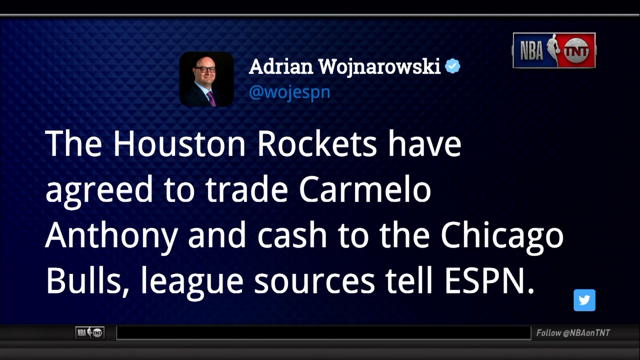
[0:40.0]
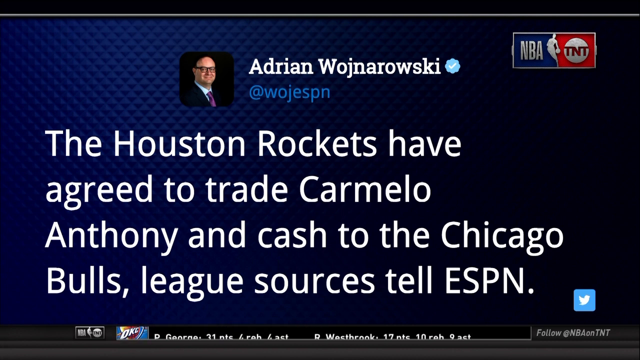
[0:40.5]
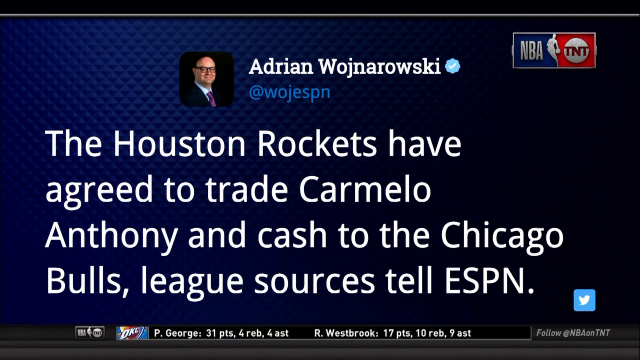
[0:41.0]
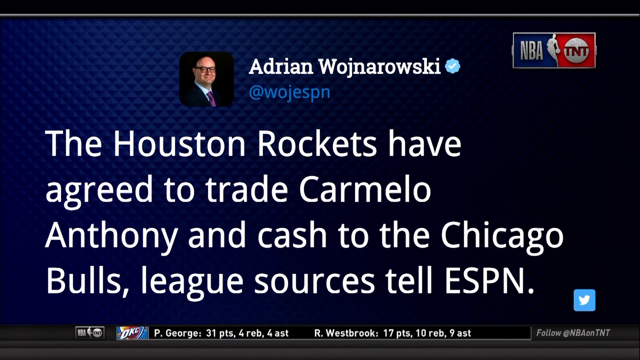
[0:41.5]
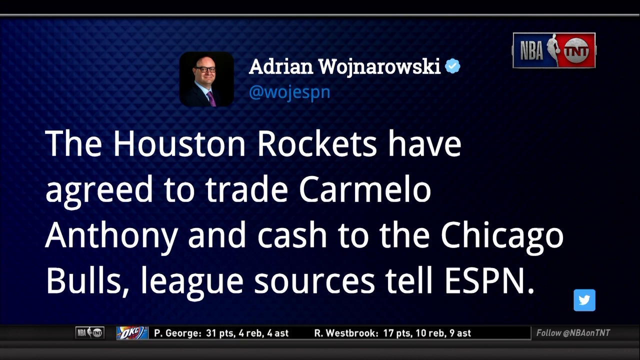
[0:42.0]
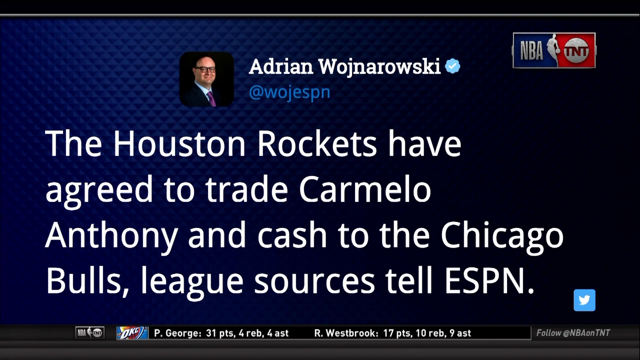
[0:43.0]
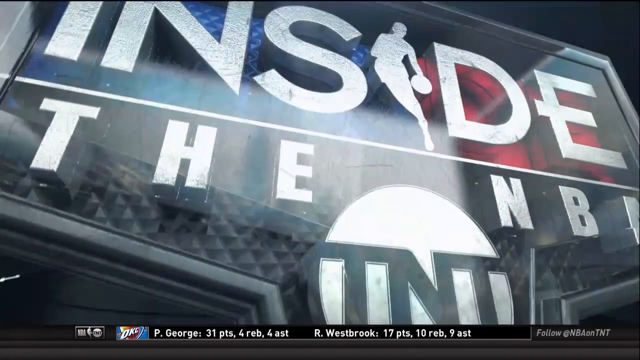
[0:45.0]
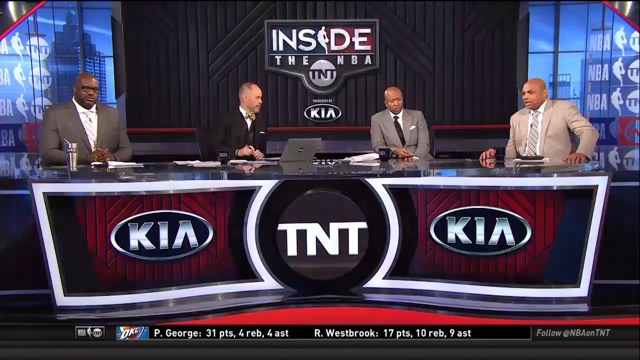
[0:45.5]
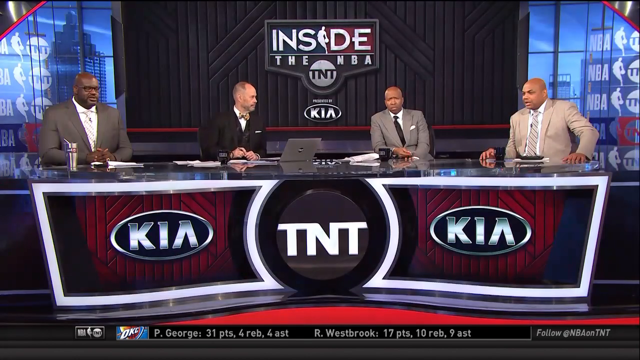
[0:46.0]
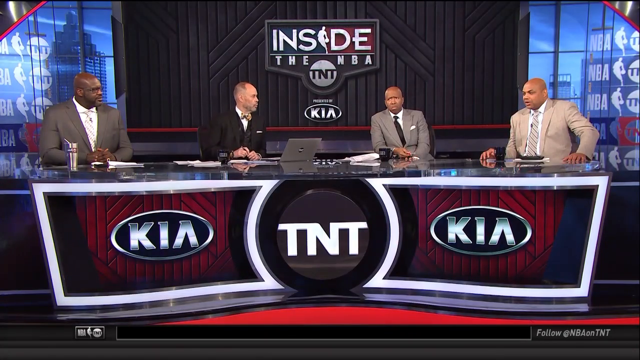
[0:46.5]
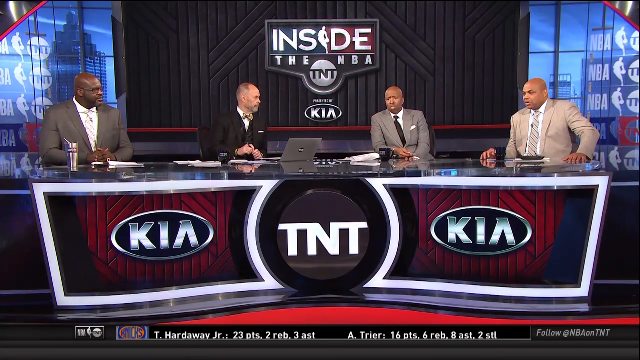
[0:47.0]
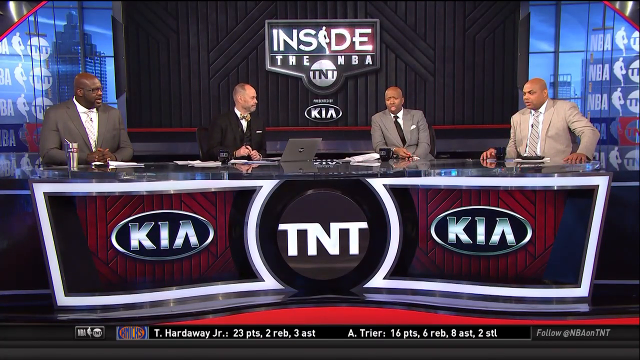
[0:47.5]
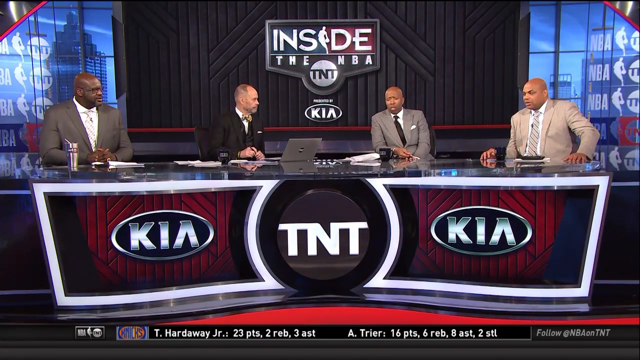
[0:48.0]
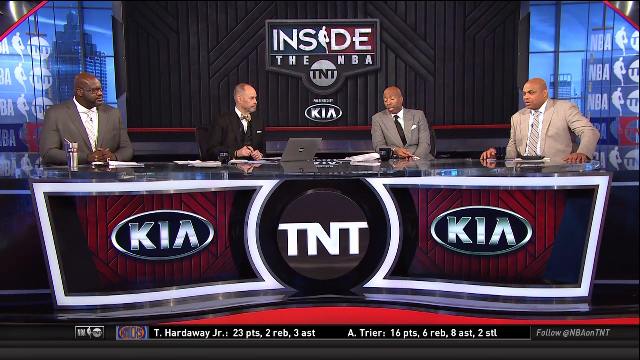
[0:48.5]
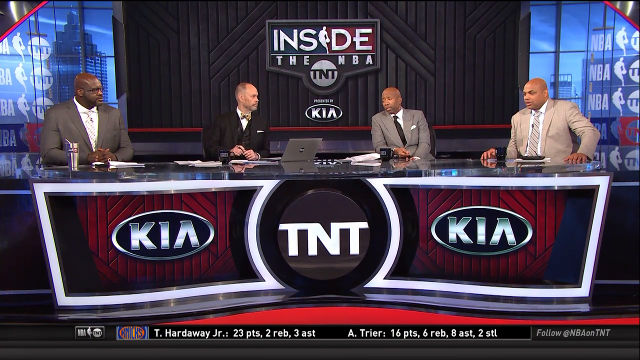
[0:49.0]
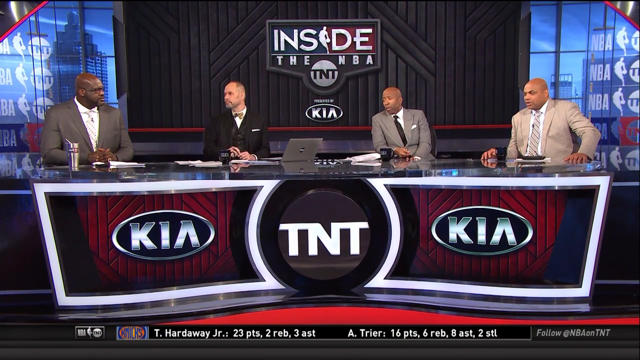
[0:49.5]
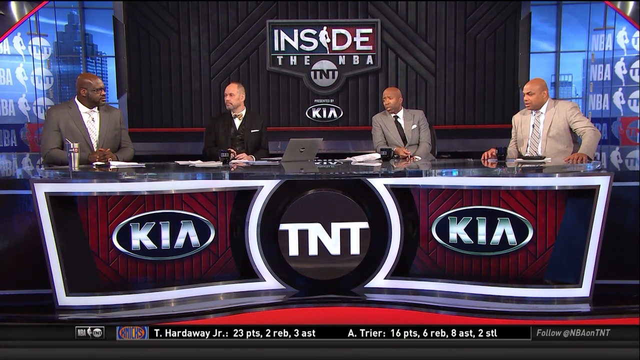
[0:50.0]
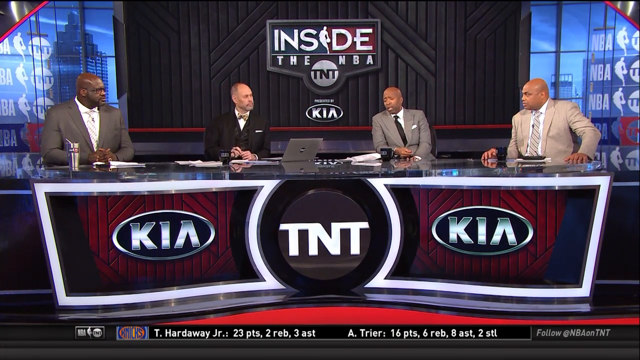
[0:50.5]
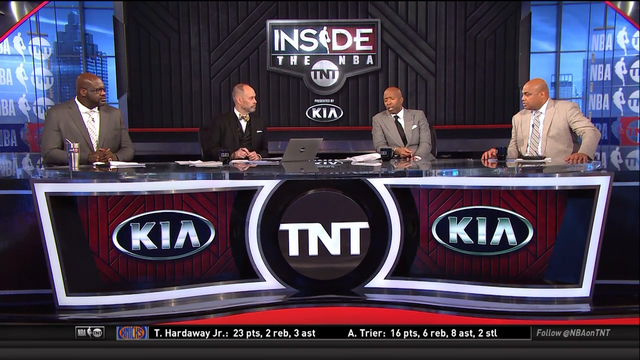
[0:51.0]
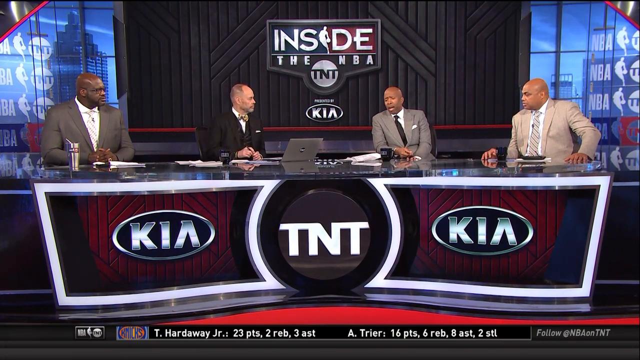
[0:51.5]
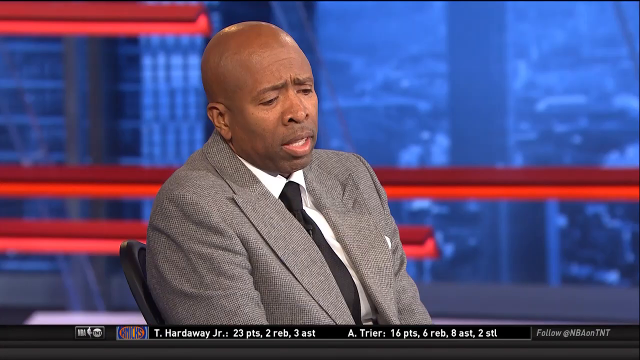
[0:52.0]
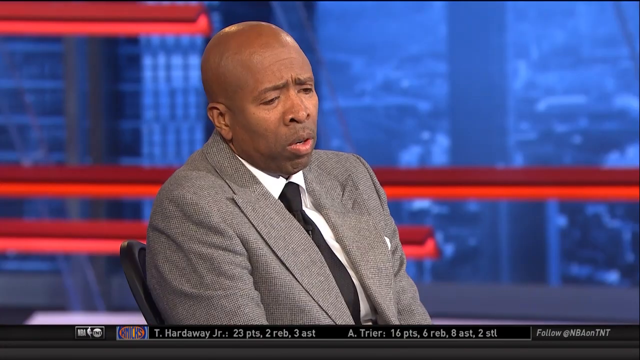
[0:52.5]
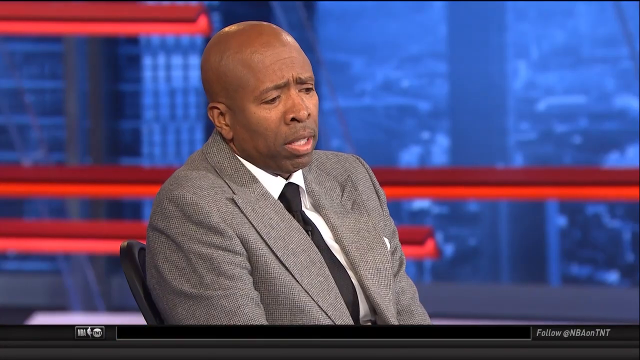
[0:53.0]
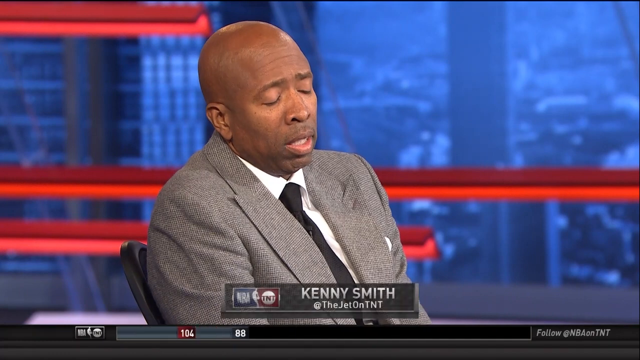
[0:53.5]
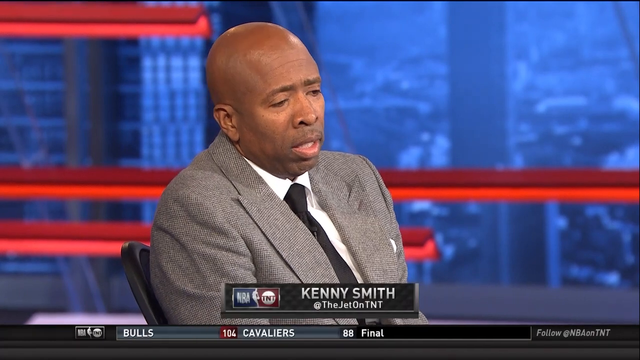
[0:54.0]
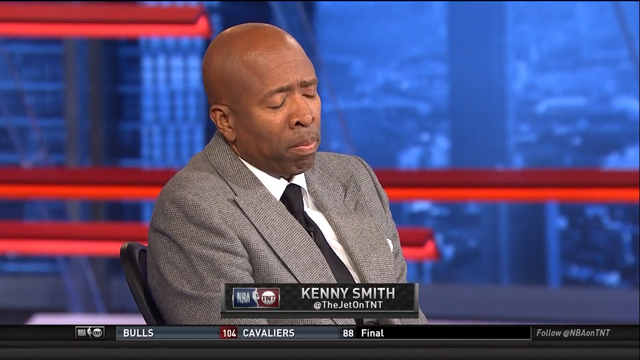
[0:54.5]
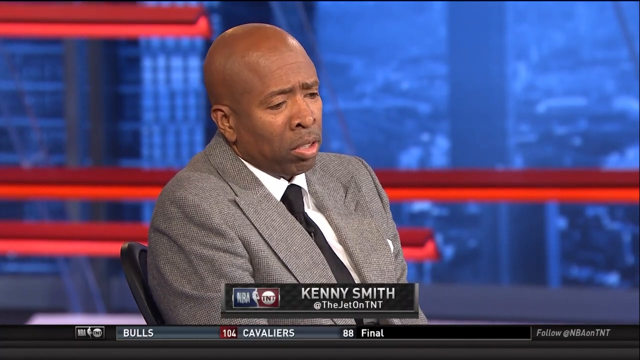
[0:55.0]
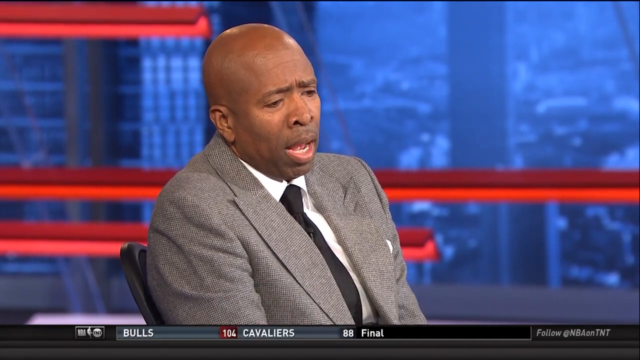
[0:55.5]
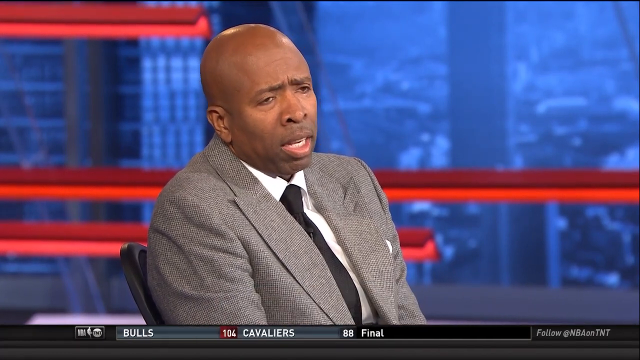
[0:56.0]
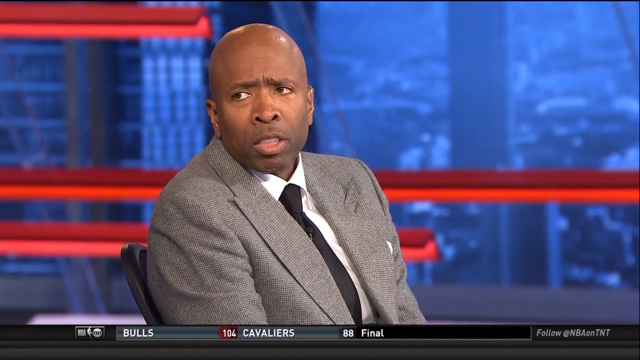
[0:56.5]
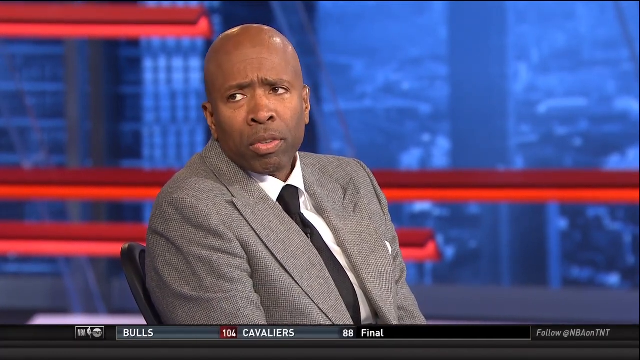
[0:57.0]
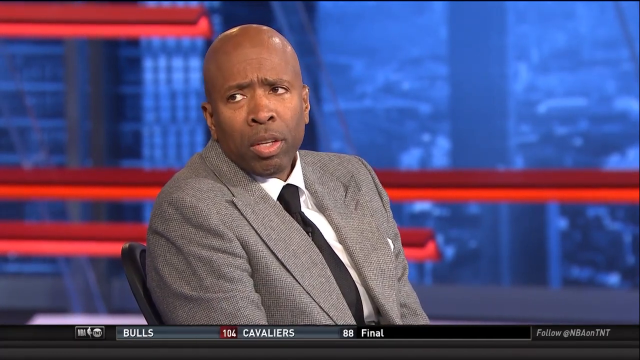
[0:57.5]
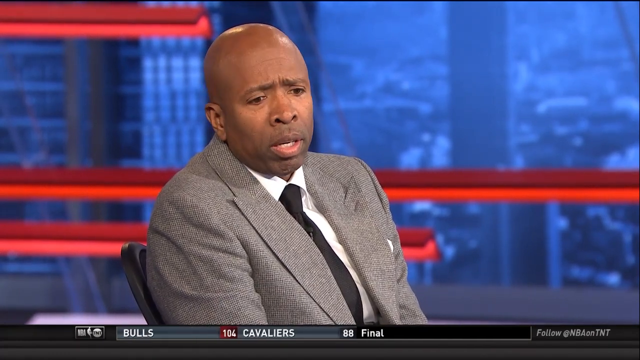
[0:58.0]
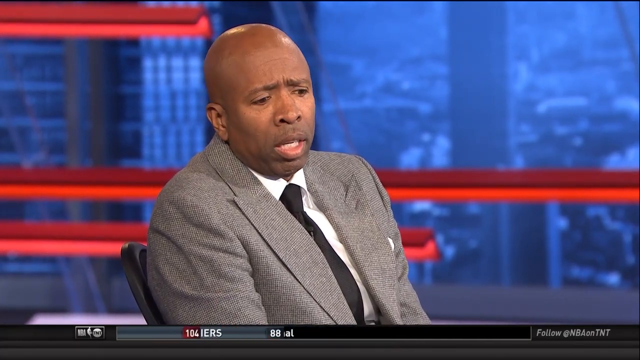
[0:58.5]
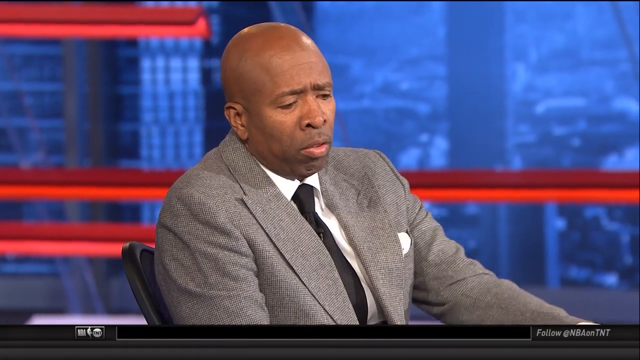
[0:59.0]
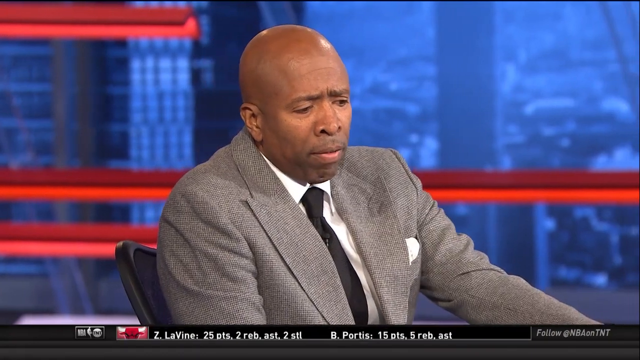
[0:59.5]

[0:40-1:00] The screen is dark blue. At the top is a small black square showing a man from the chest up, wearing a black suit, white shirt and purple tie, with black hair and thick black-rimmed glasses. To the right of the square, in white, it reads "Adrian Wojnarowski," with "At Woj Spn" beneath it, and below that, in white: "The Houston Rockets have agreed to trade Carmelo Anthony in cash to the Chicago Bulls. League sources tell ESPN." The video then cuts to a large black desk with four men sitting at it facing the camera. On the front left of the desk is "Kia" inside a black oval, and the same black oval with "Kia" is on the right side. In the middle of the desk is a black circle with the letters "TNT" in white across it. The man at the left of the desk is a black man in a gray suit, white shirt and light tie. To his left is a white man in a black suit and bow tie. To his left is a black man in a gray suit, white shirt and black tie, and to his right is a black man in a tan suit, white shirt and tan striped tie. Behind him is a black wall with text on it, and underneath that a silver circle with the letters "TNT," then a black oval with the letters "KIA" inside it.